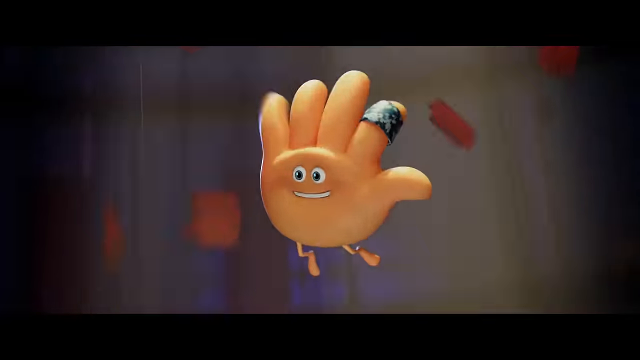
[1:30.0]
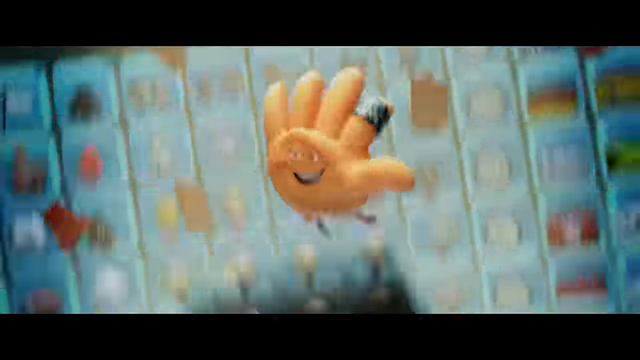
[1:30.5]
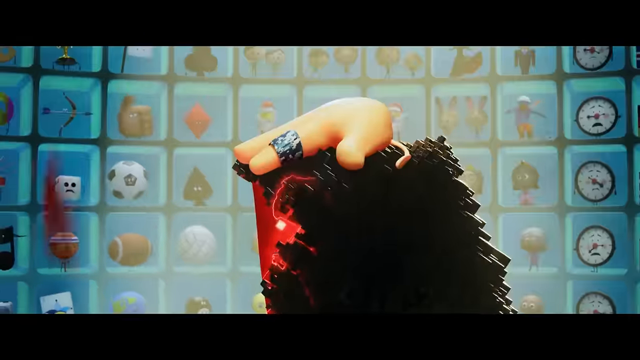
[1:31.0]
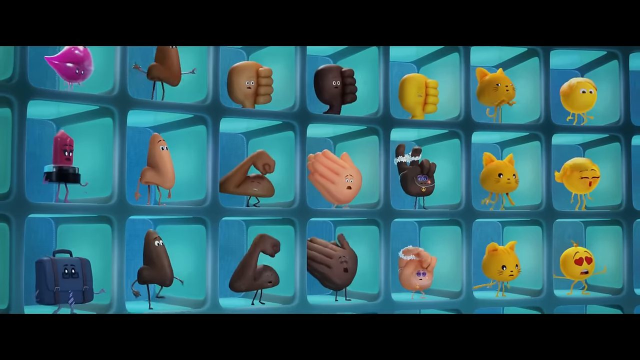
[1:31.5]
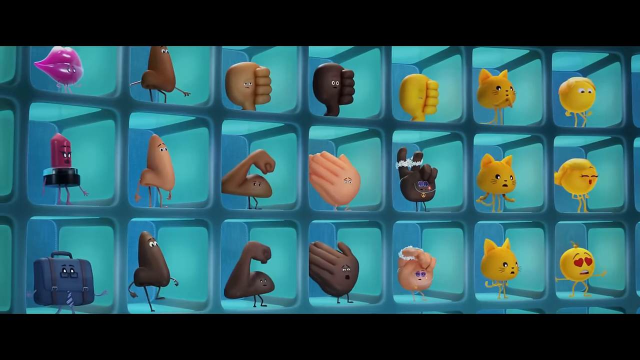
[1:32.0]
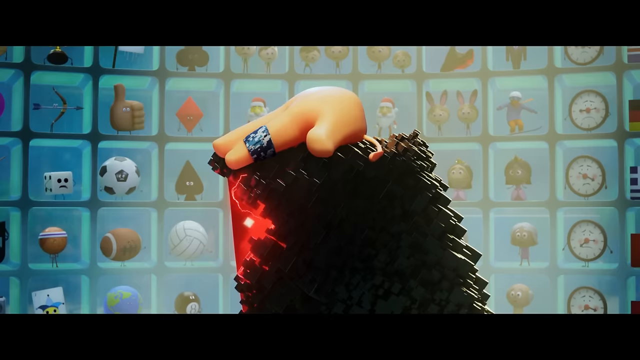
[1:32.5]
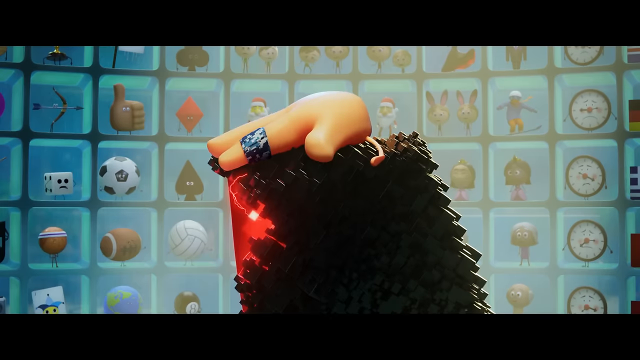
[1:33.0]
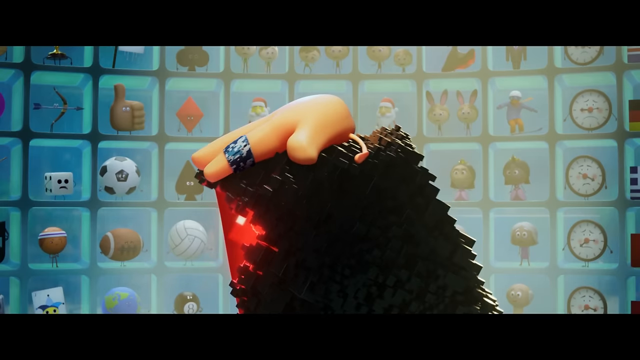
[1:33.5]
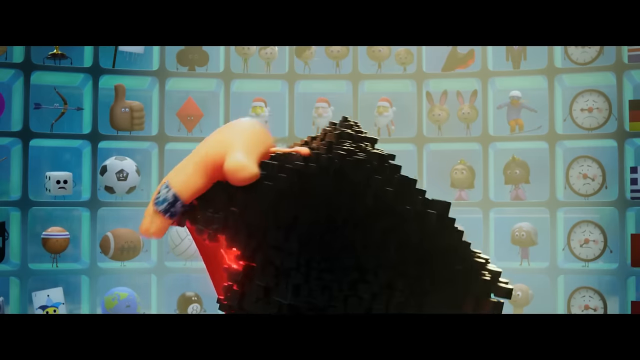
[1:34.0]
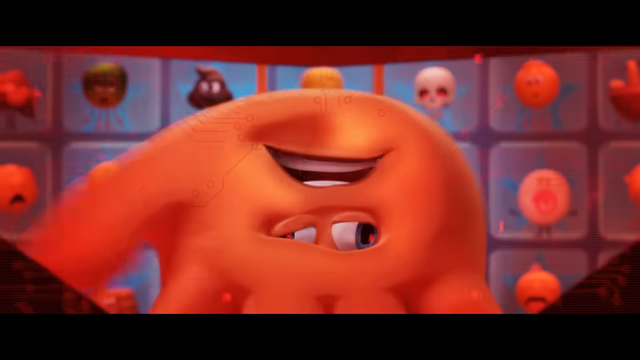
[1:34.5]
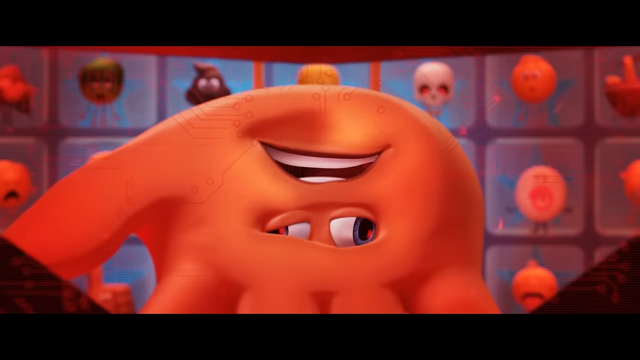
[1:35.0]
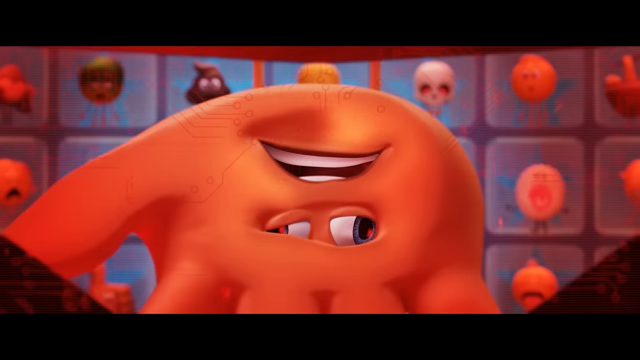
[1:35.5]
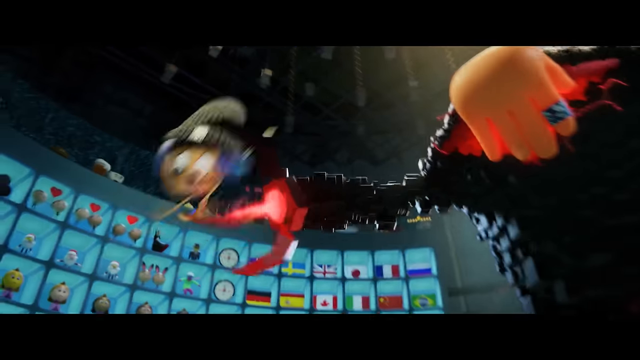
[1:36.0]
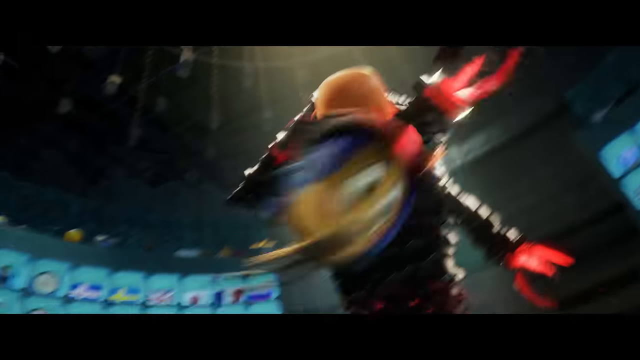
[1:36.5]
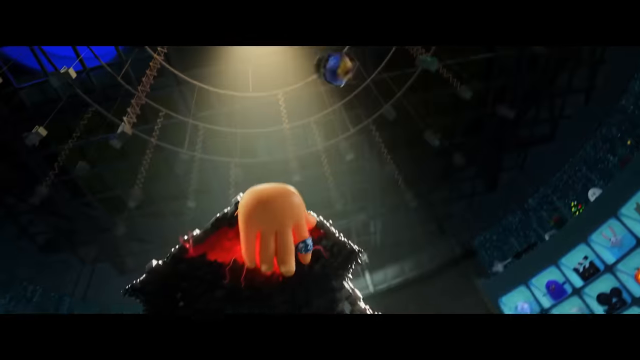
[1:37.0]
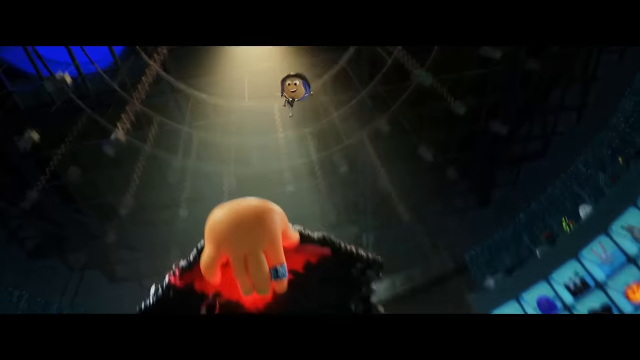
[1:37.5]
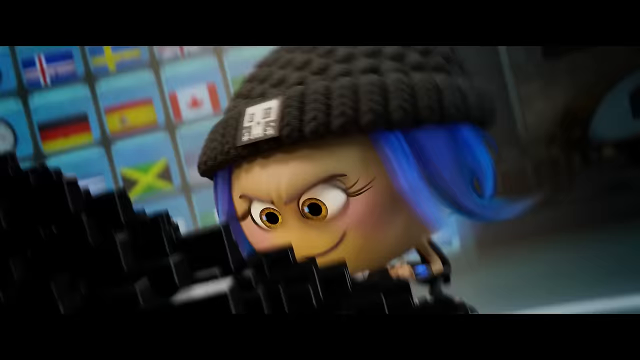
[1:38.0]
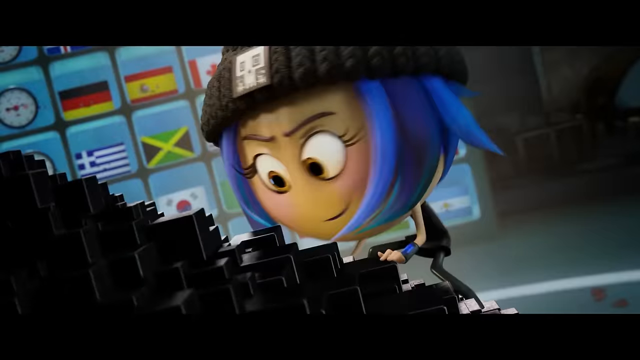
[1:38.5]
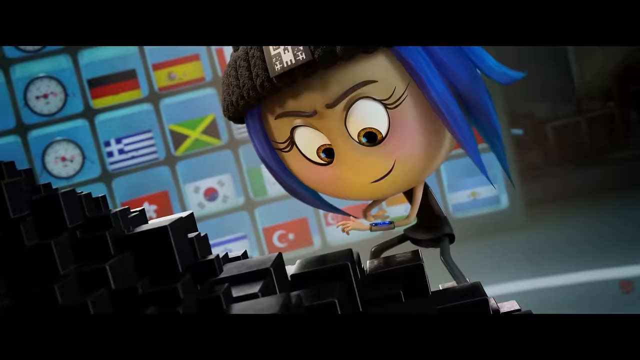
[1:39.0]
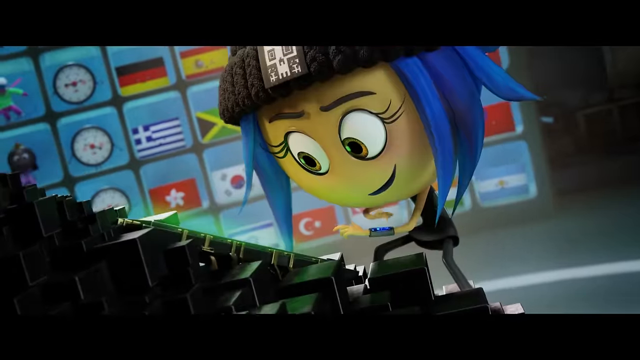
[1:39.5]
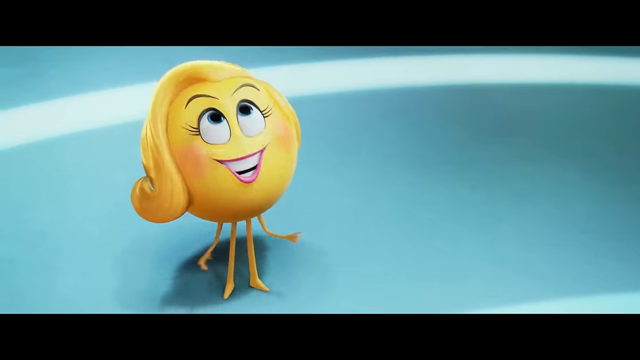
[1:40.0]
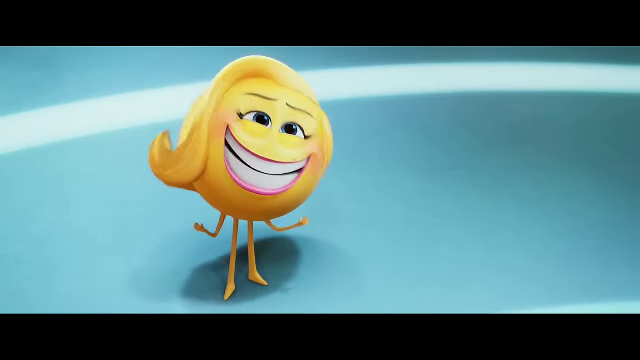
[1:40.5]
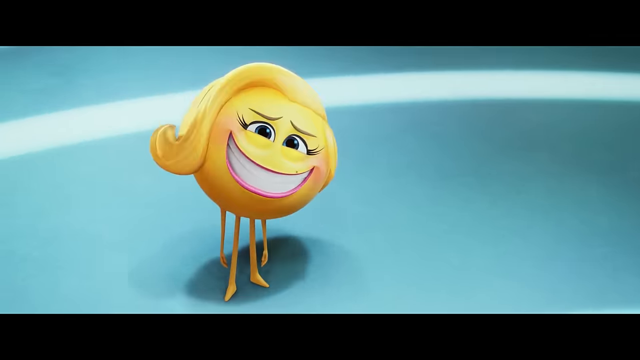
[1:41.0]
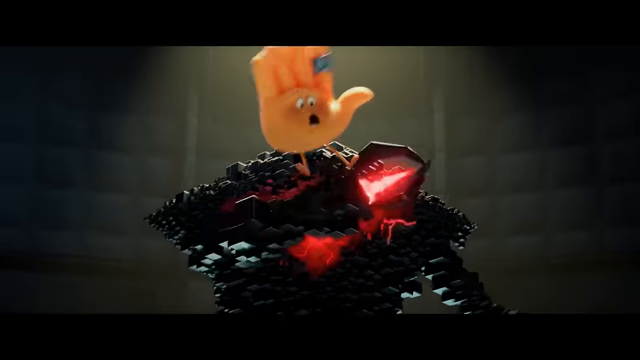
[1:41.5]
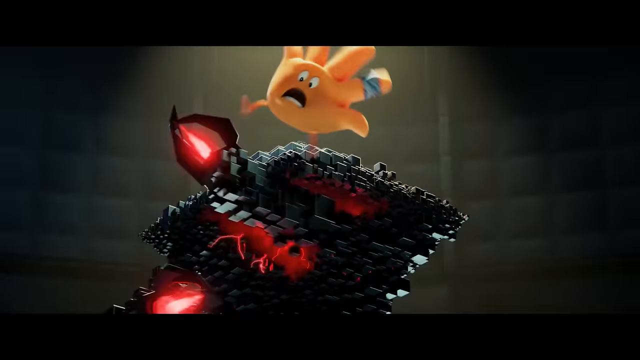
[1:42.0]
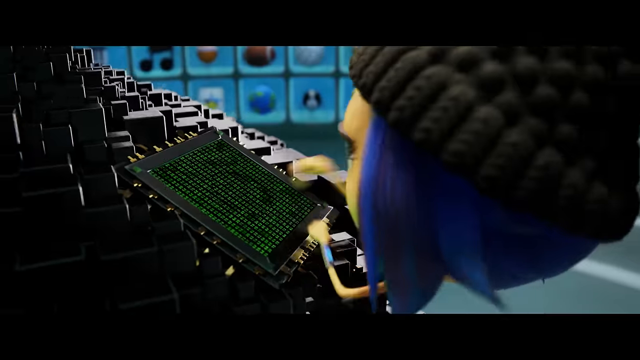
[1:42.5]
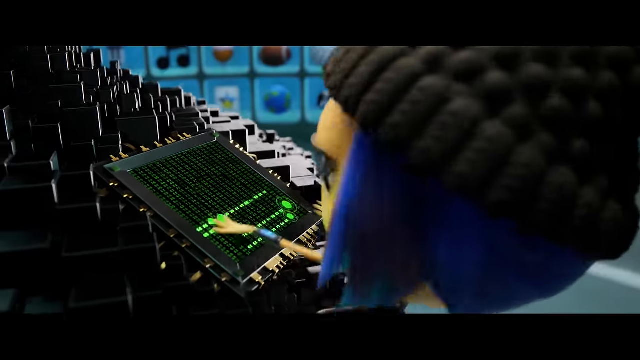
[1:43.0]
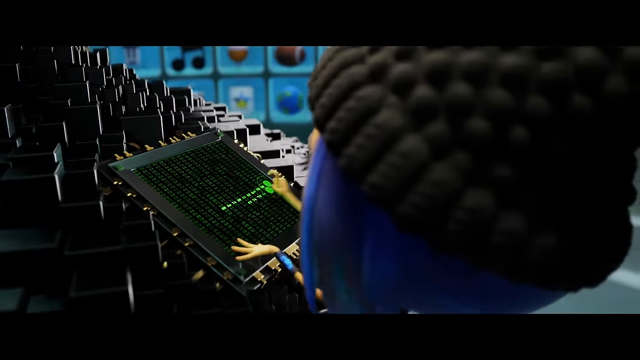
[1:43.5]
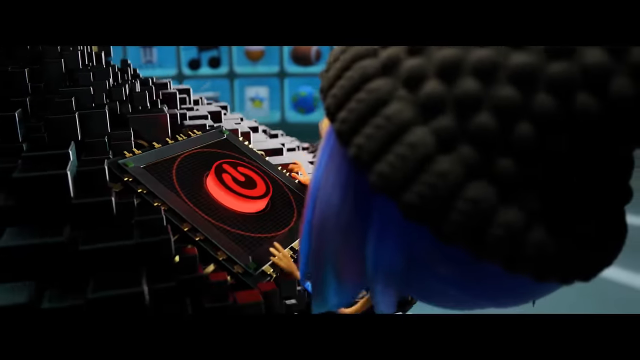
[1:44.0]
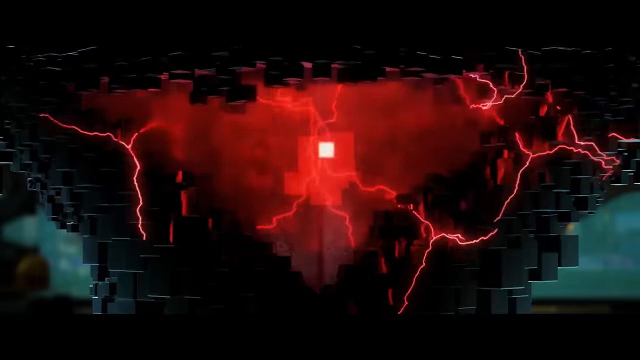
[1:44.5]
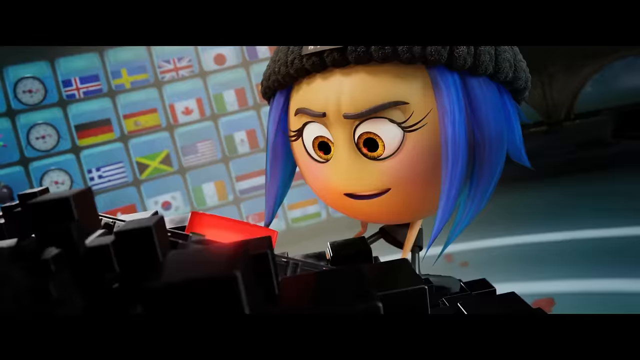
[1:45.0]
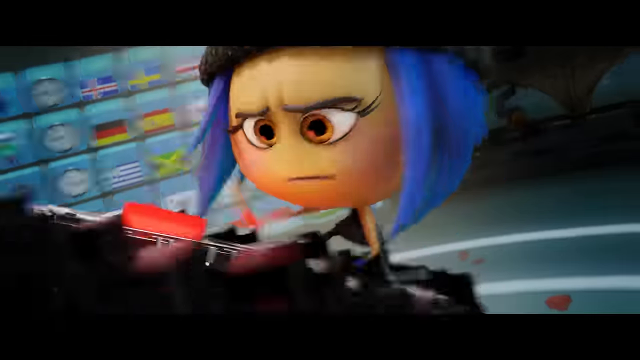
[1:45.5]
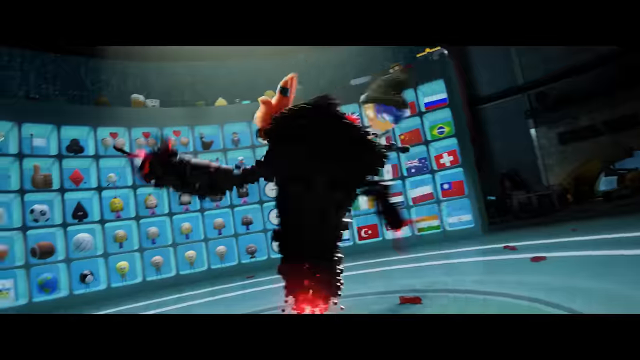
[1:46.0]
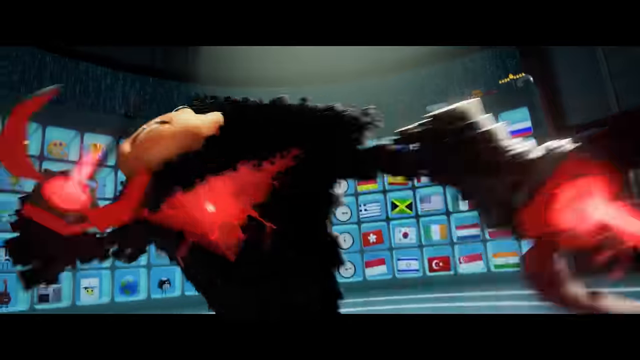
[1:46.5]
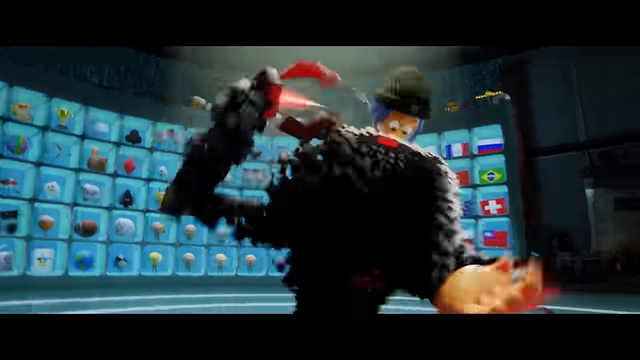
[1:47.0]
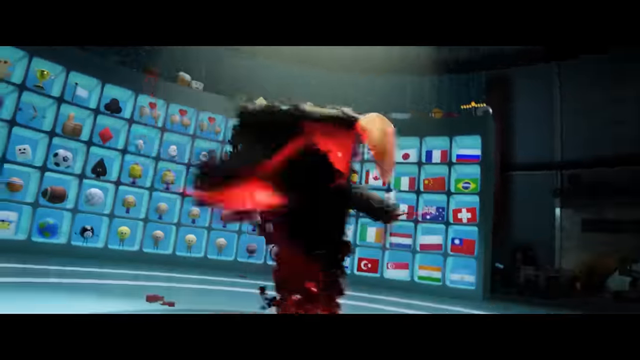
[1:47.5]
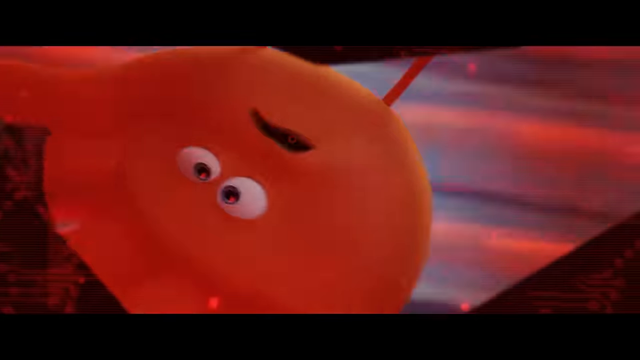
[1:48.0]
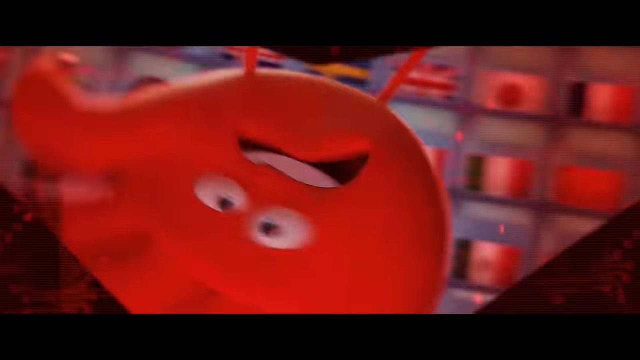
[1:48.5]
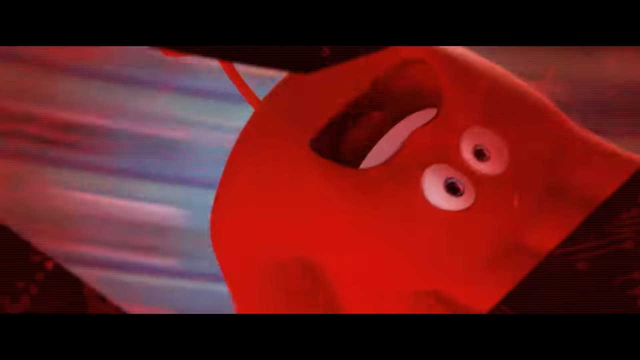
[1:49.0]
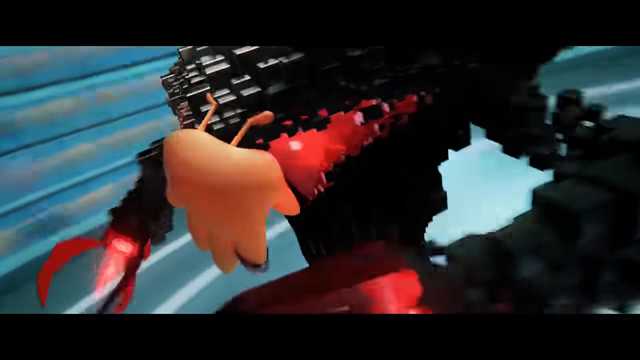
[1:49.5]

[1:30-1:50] The high five emoji enters and crashes on top of the robot's face as it makes its entrance. Some other emojis show up as well, including a ninja emoji who is a hacker, probably trying to destroy the evil robot's system from outside. A switch button shows up, suggesting the hacker is close to switching off the robot. Smiler commands the robot to be aware. The robot swings while the characters struggle to contain it. The robot tries to squash, and the palm jumps up and down trying to avoid being squashed. The robot notices it is being hacked and moves abruptly, which makes the hacker lose balance and hang by one hand.